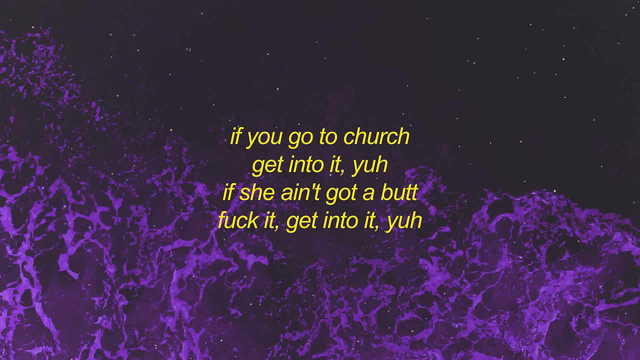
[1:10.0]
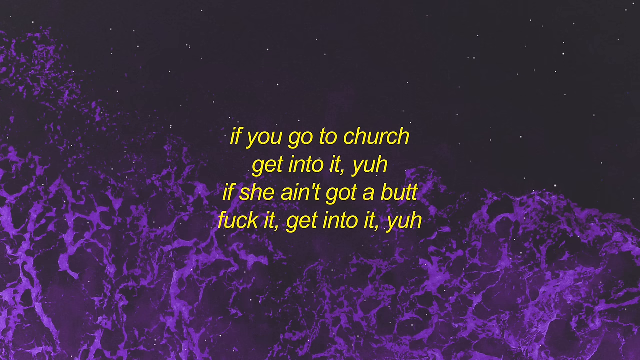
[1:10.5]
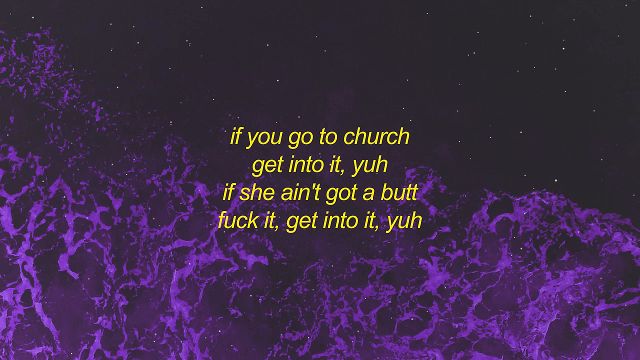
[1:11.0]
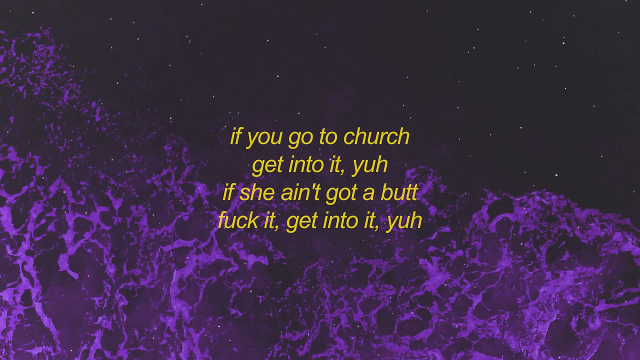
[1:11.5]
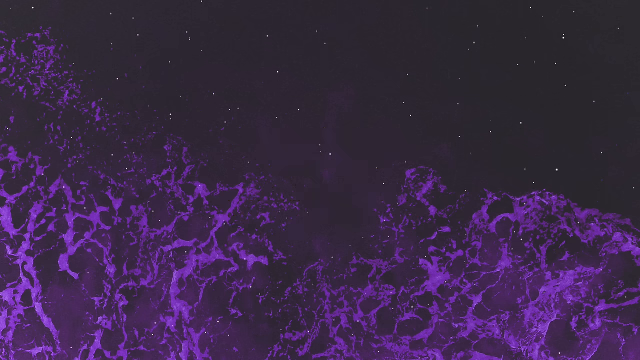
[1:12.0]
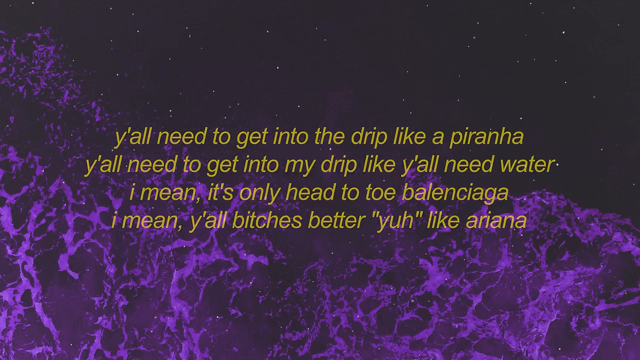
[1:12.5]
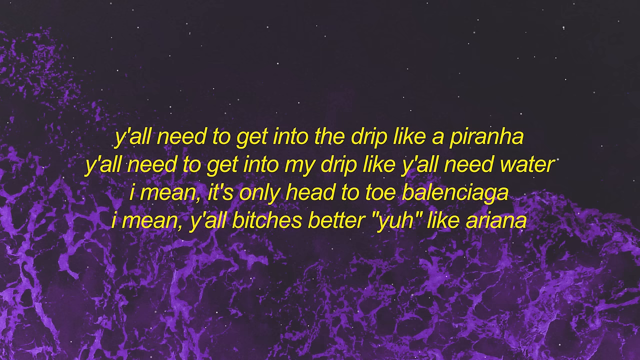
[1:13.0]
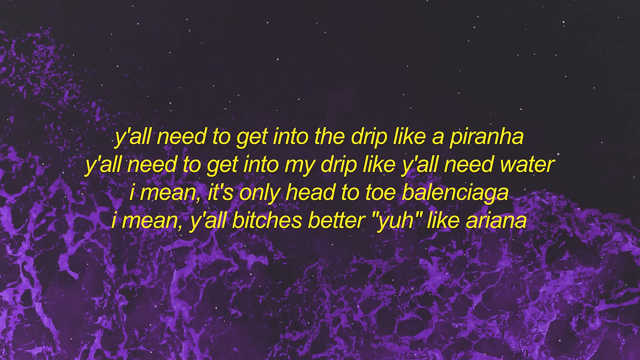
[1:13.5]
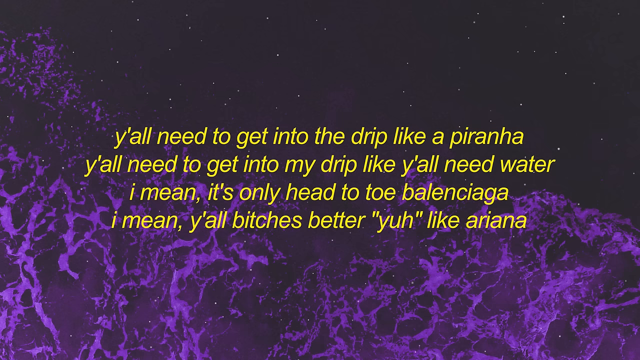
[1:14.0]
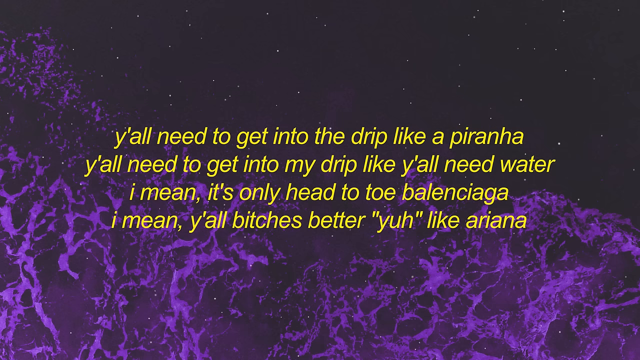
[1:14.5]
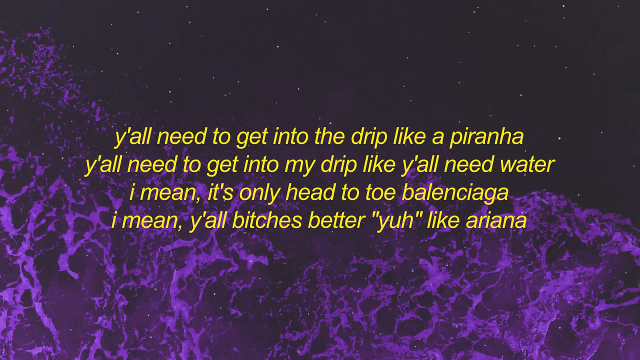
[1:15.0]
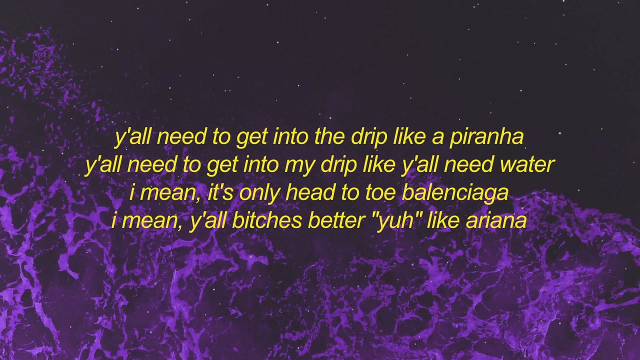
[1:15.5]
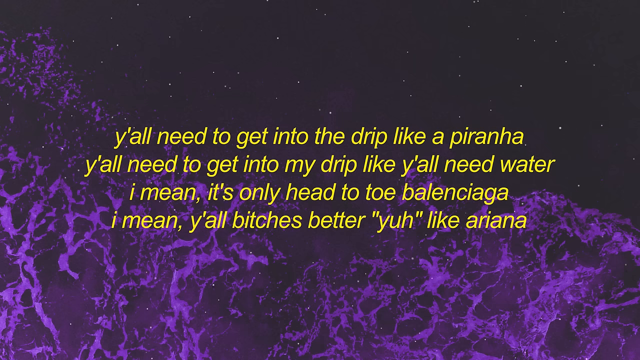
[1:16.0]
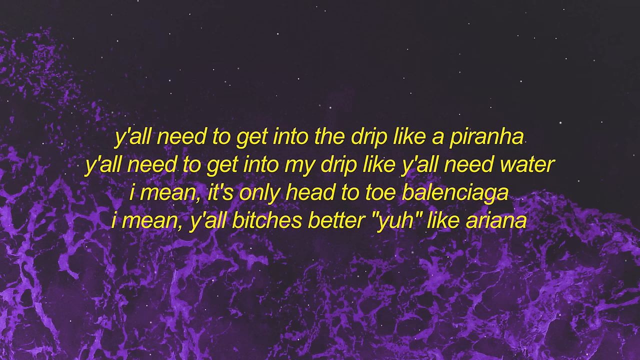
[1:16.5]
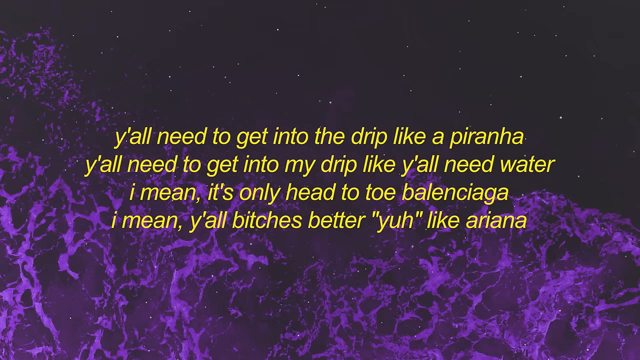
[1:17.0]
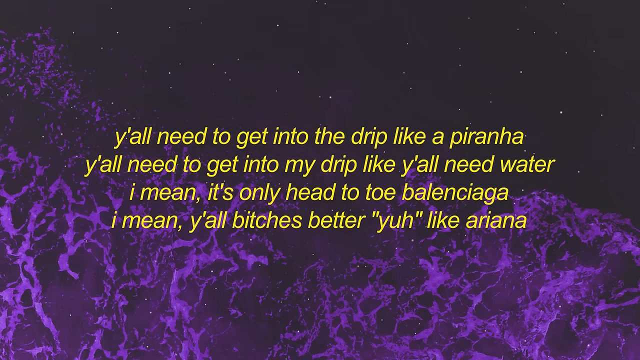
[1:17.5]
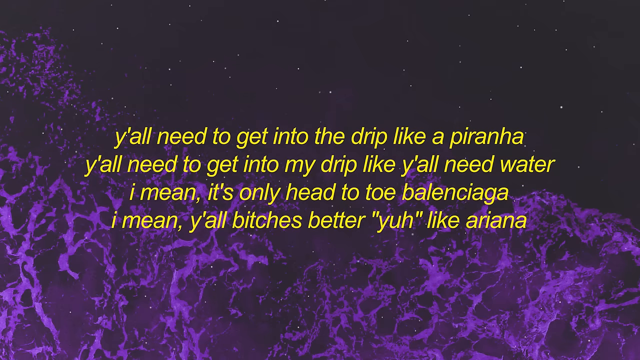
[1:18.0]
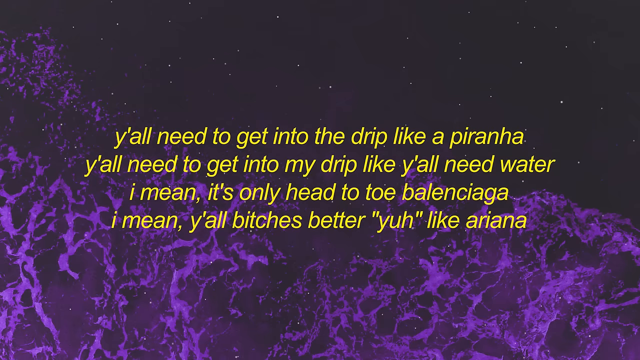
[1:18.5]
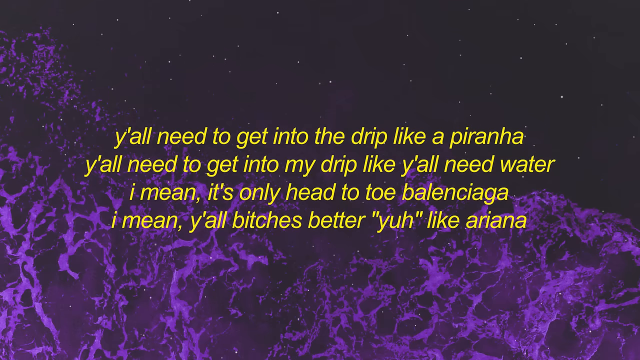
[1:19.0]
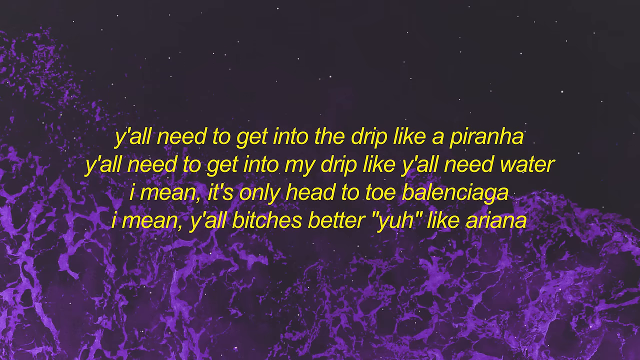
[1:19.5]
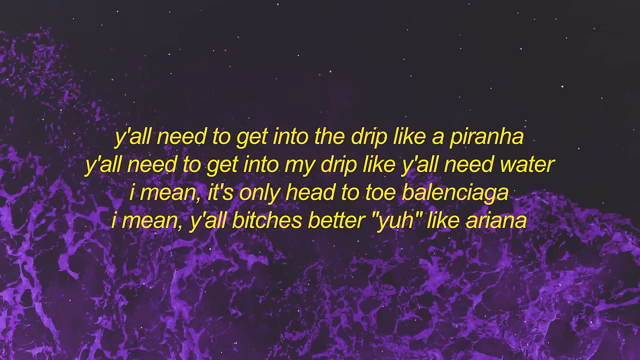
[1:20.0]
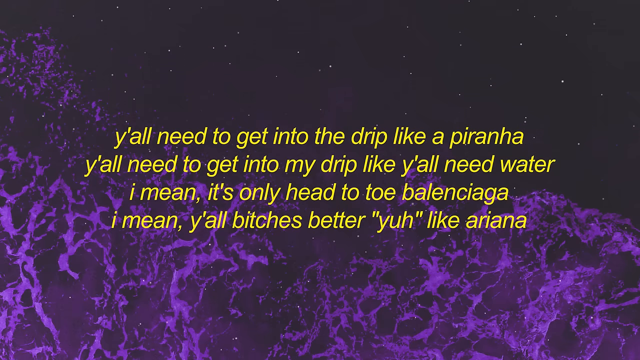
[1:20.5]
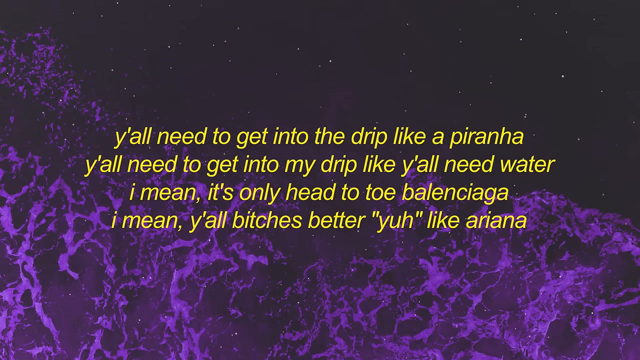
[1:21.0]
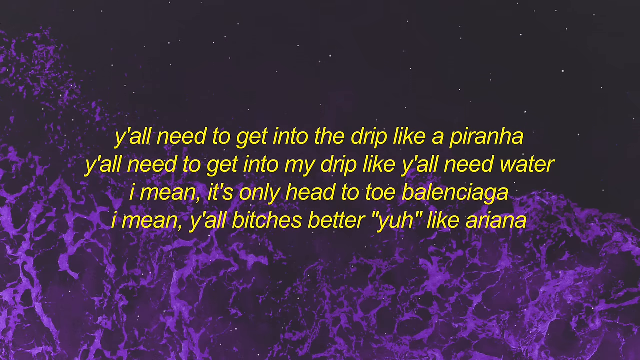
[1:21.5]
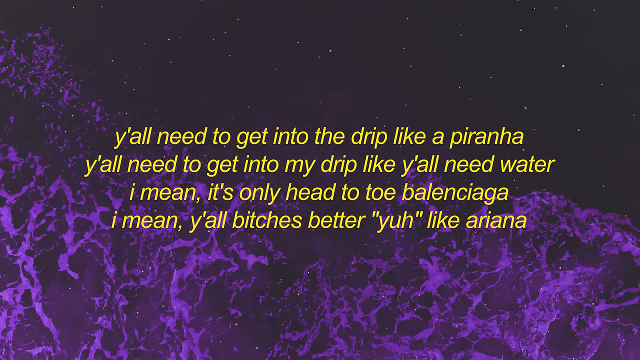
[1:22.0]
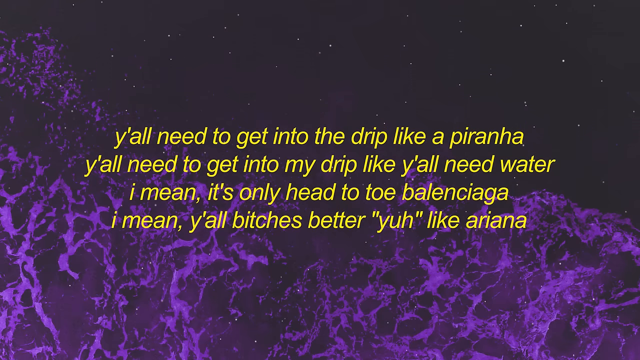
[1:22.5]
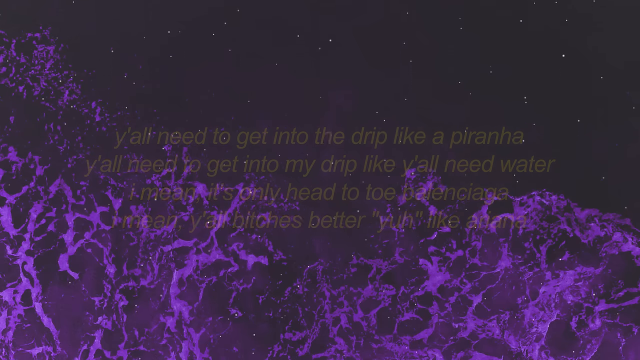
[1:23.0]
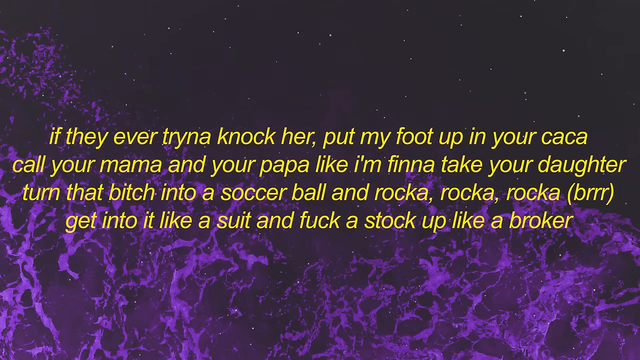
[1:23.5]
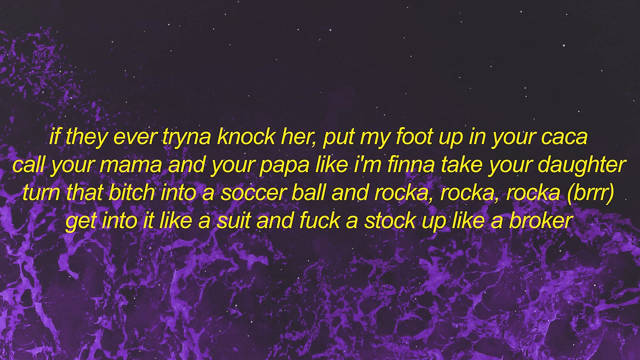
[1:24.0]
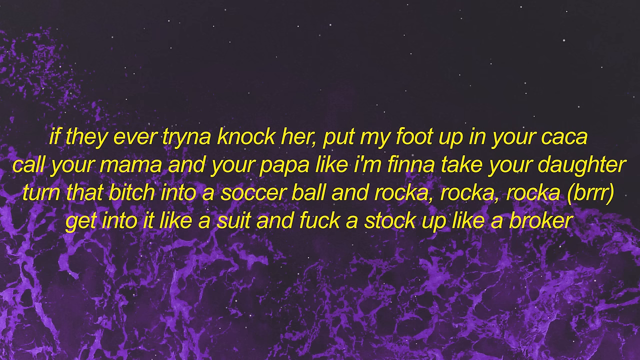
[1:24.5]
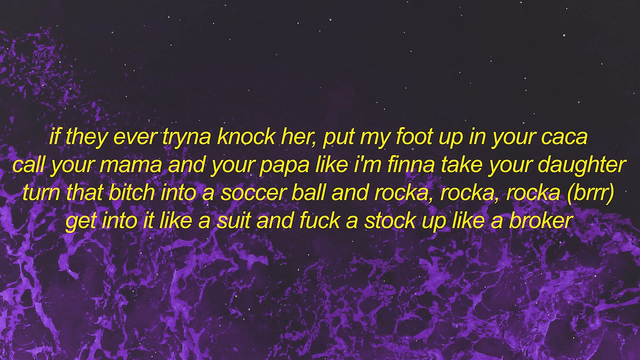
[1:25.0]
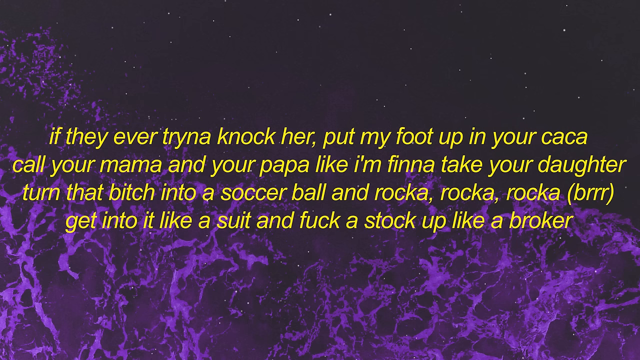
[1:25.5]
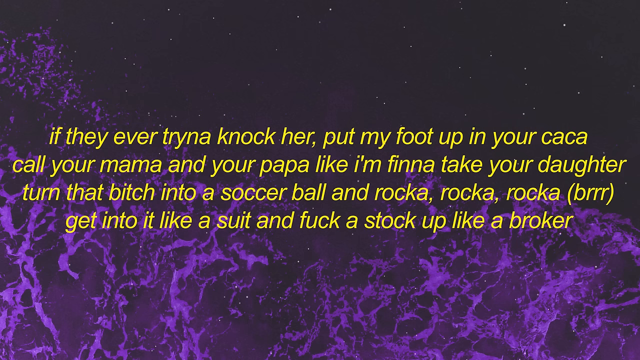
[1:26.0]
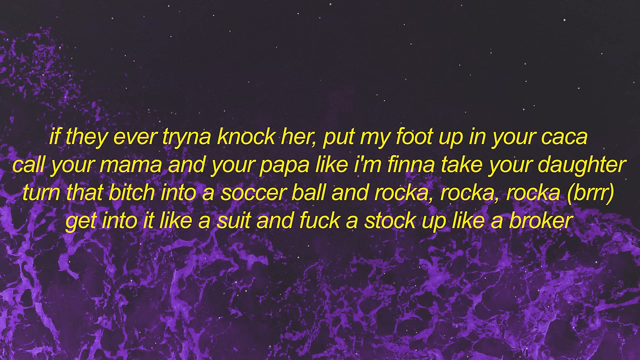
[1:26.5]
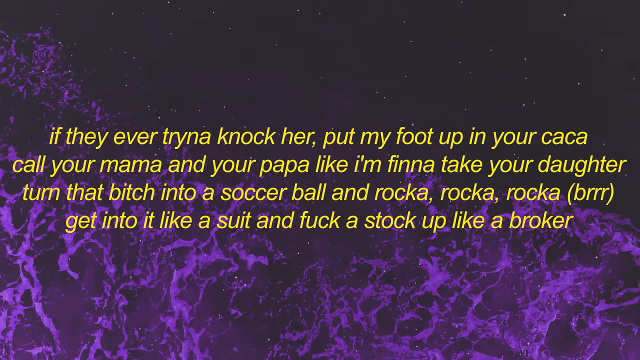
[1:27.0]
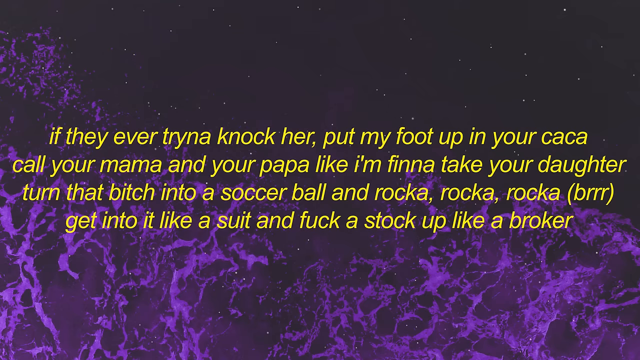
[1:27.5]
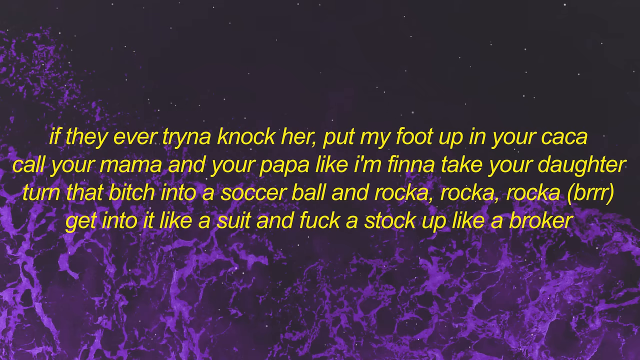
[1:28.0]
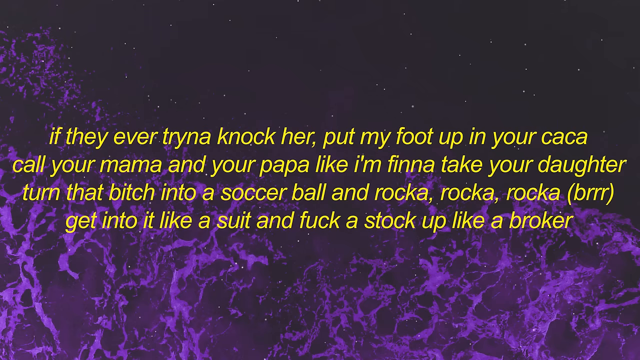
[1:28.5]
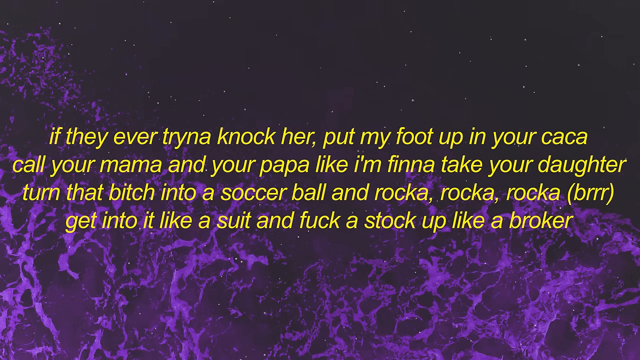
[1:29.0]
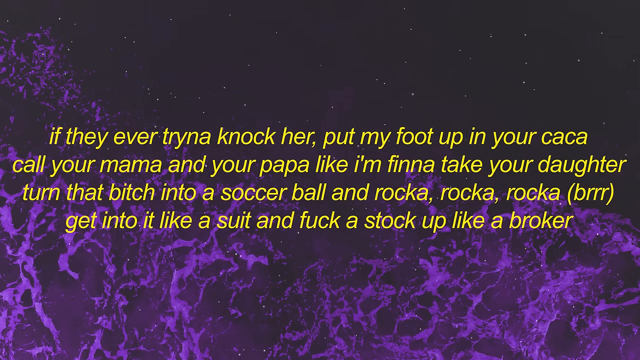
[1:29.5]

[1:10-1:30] Lyrics to a song or poem start with "if you go to church get into it Yeah, if she ain't got a butt fuck it get into it Yeah." The next part reads "y'all need to get into the drip like a piranha Y'all need to get into my drip like y'all need water. I mean, it's only head-to-toe Balanchia, I mean you all bitches better. Yeah, like Ariana." The next screen continues with "if they ever trying to knock her put my foot up your caca Call your mama and your papa like I'm fine I take your daughter turn that bitch into a soccer ball." The lyrics then go on with "if you go to church get into it" and "Y'all need to get the drip like a piranha you all need to get in my drip like y'all need water I mean, it's only head-to-toe Balanchia, I mean you all bitches better. Yeah, like Ariana."